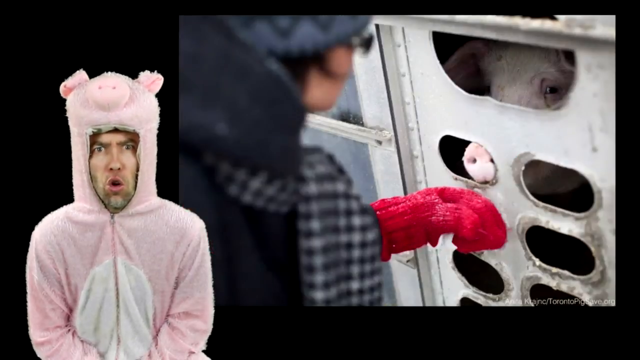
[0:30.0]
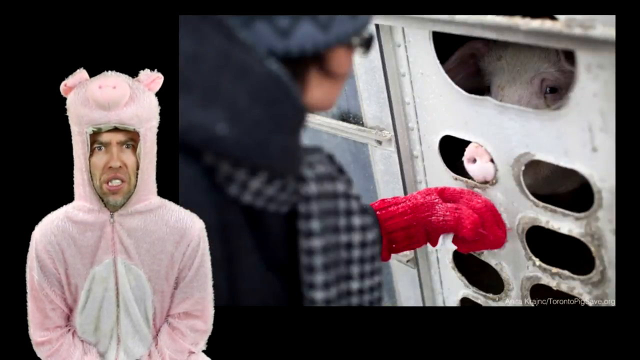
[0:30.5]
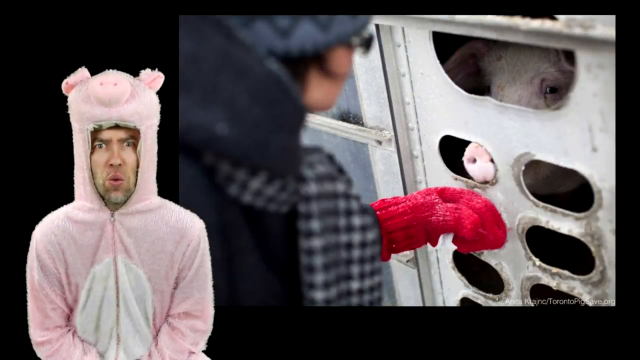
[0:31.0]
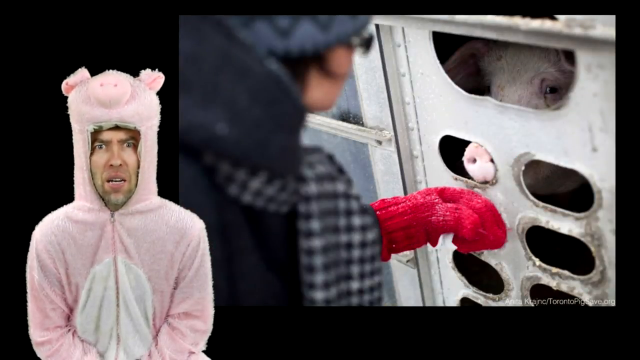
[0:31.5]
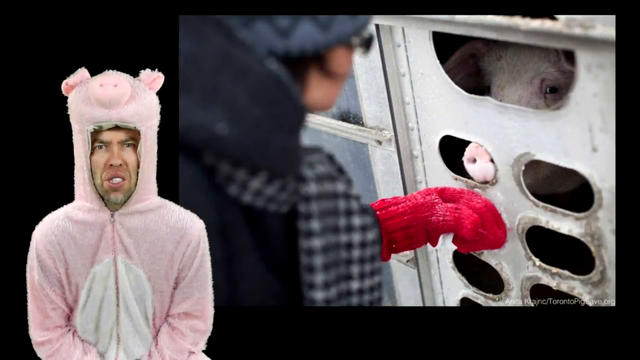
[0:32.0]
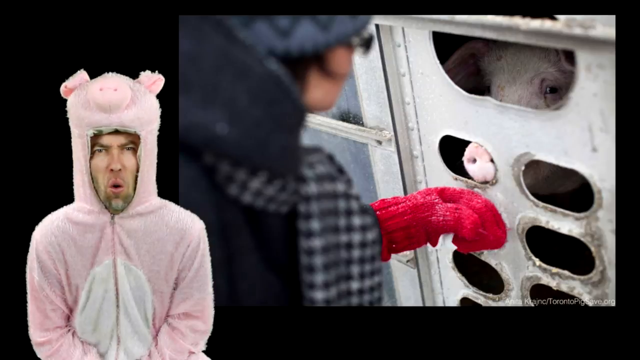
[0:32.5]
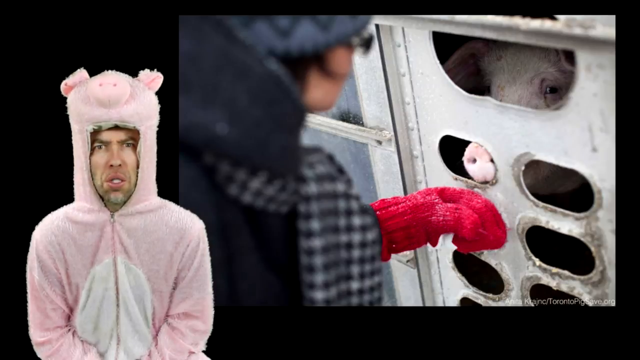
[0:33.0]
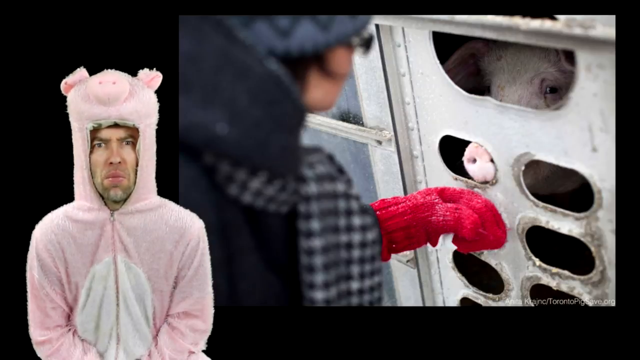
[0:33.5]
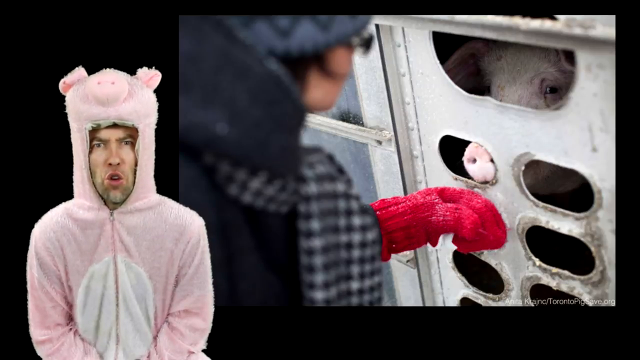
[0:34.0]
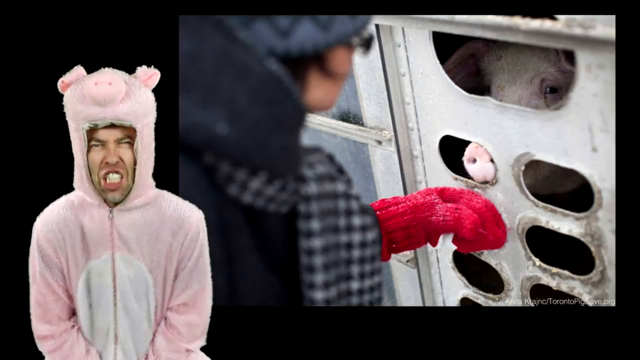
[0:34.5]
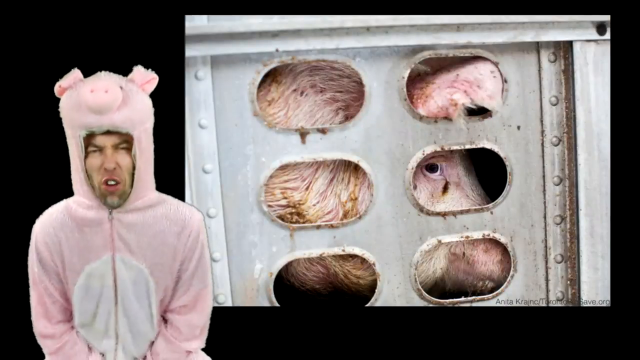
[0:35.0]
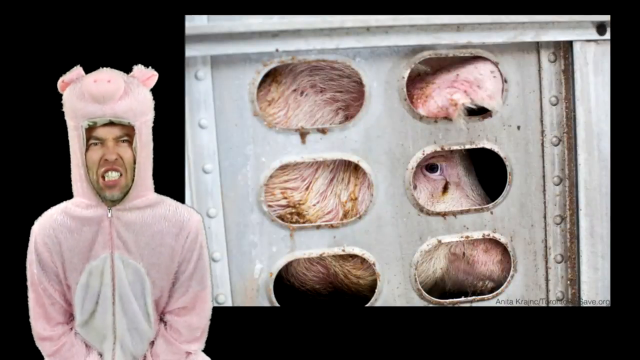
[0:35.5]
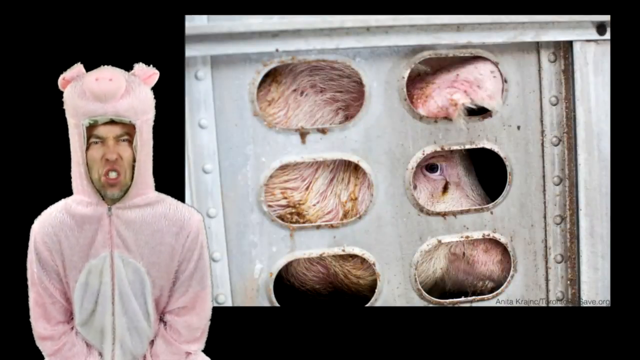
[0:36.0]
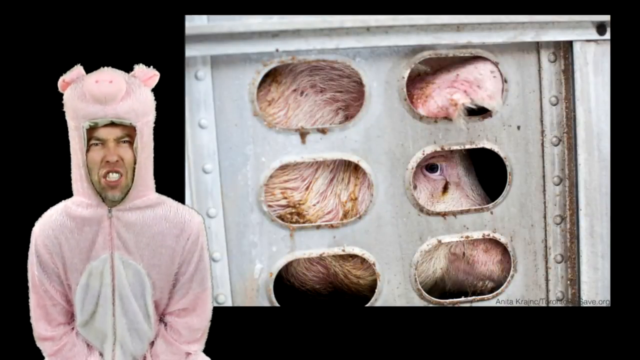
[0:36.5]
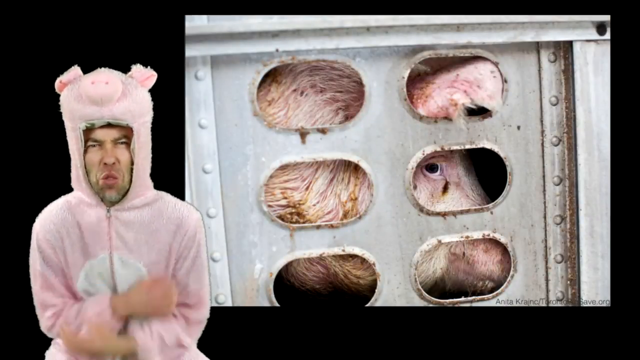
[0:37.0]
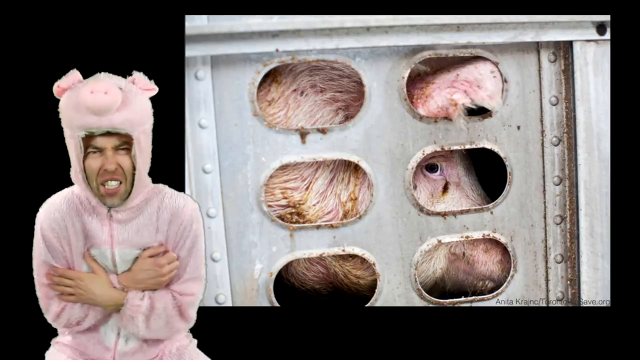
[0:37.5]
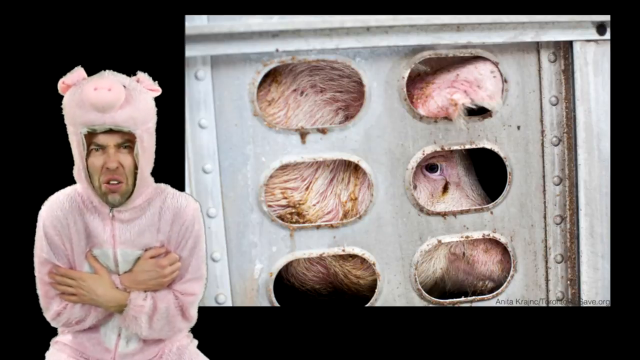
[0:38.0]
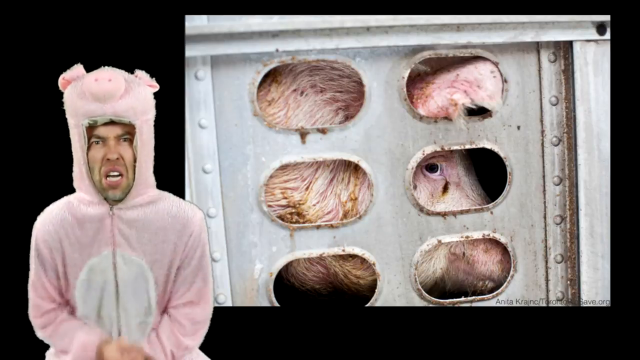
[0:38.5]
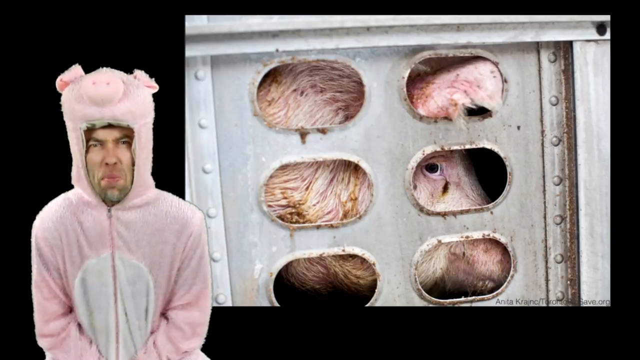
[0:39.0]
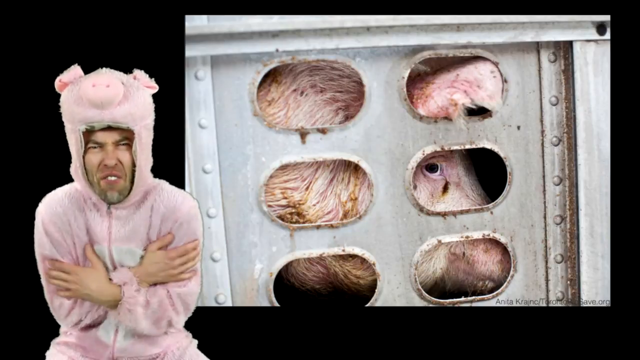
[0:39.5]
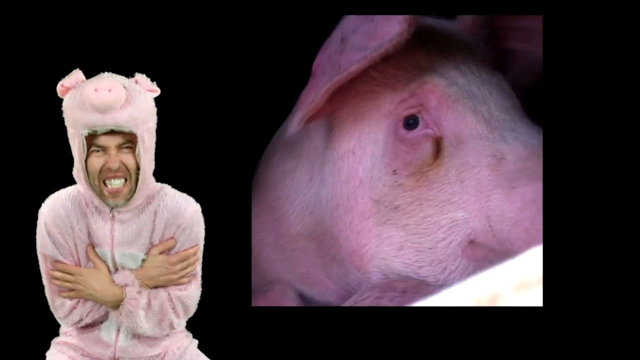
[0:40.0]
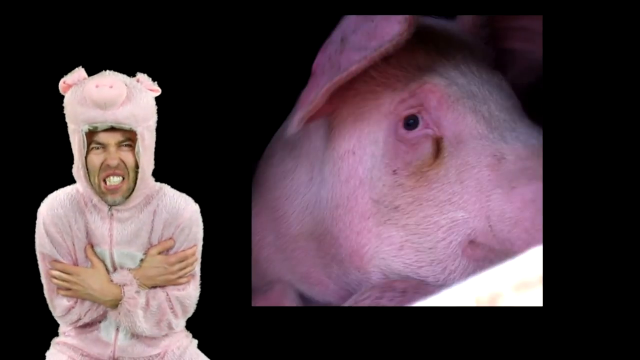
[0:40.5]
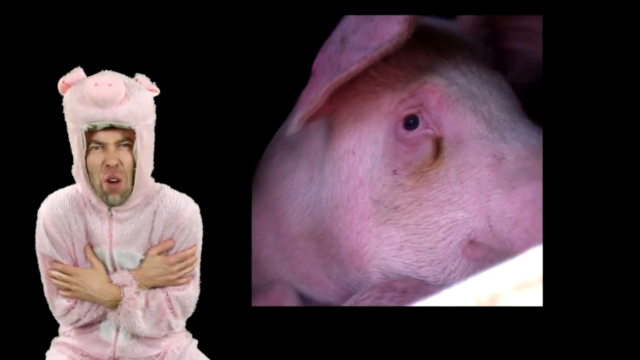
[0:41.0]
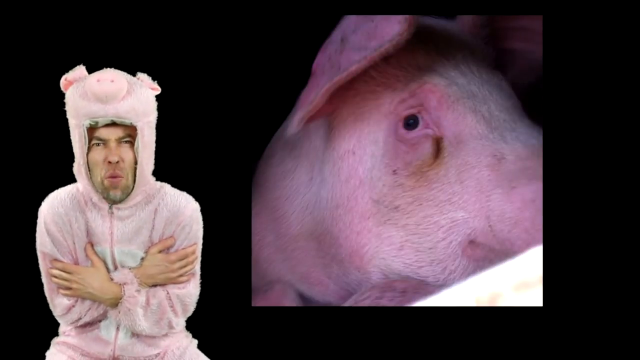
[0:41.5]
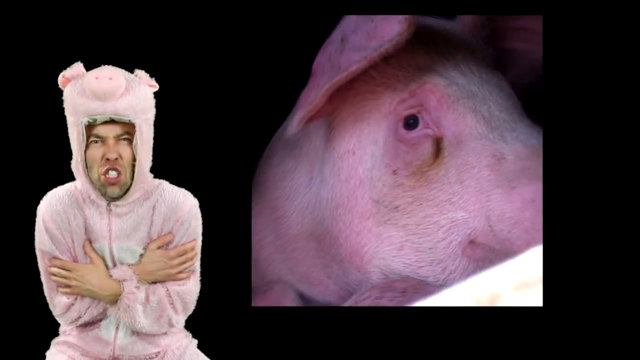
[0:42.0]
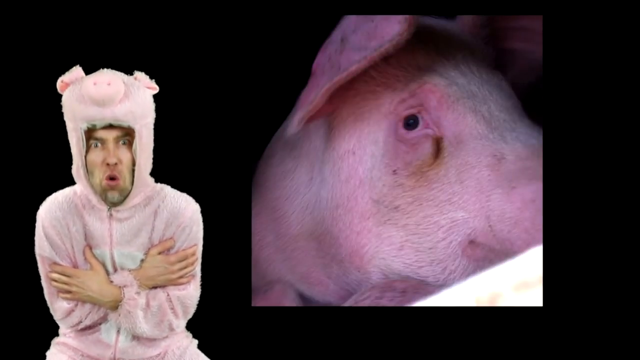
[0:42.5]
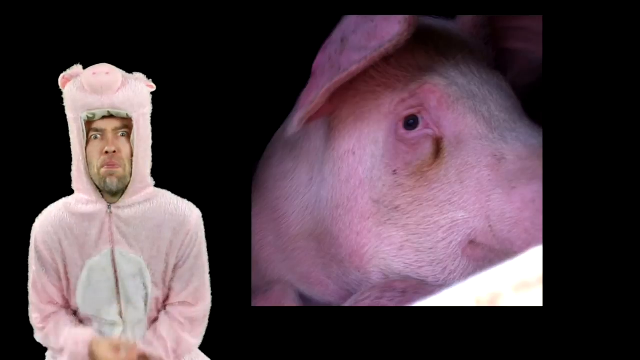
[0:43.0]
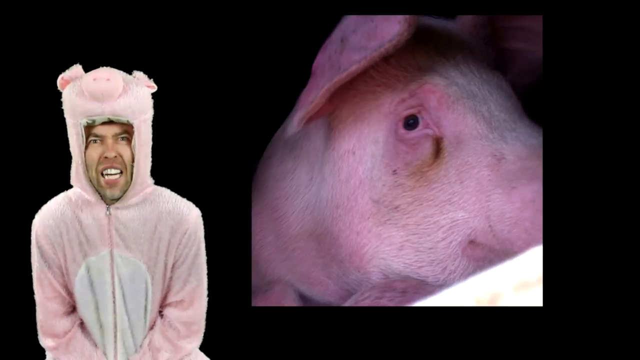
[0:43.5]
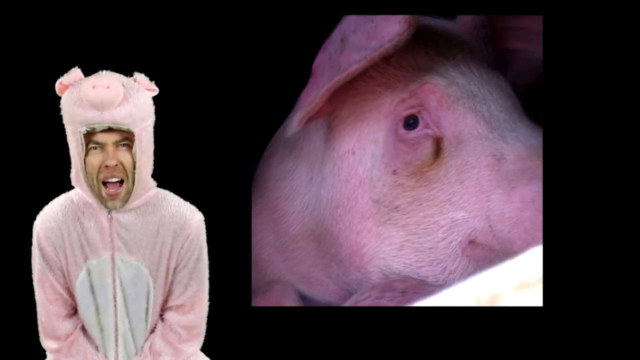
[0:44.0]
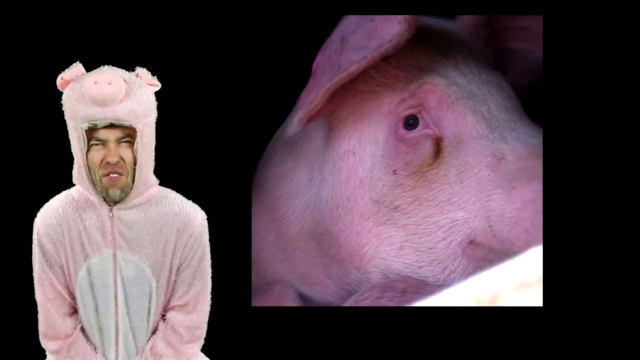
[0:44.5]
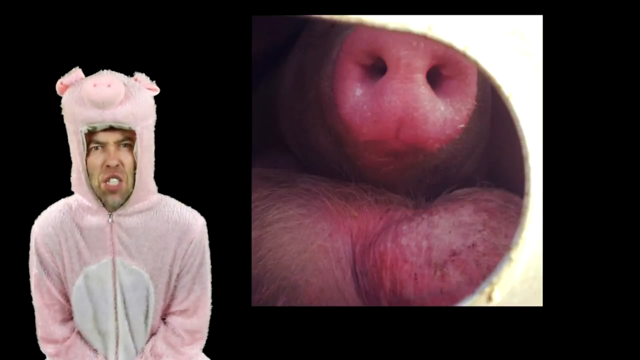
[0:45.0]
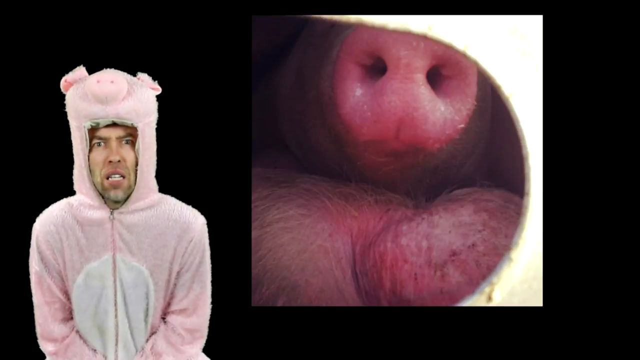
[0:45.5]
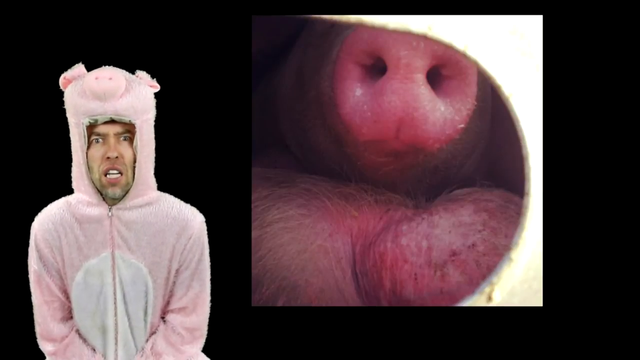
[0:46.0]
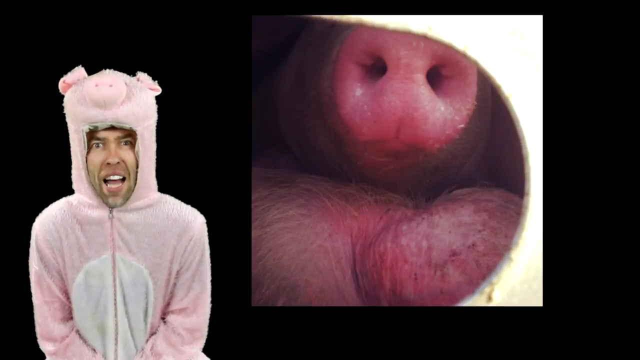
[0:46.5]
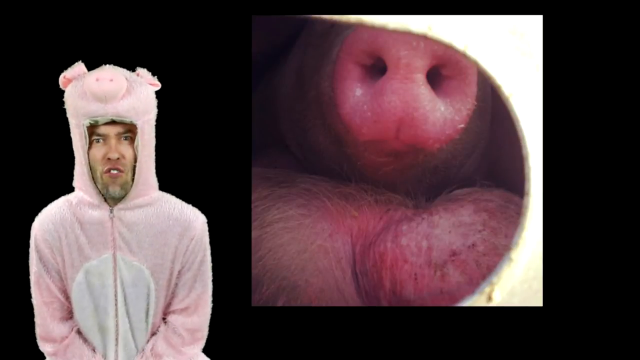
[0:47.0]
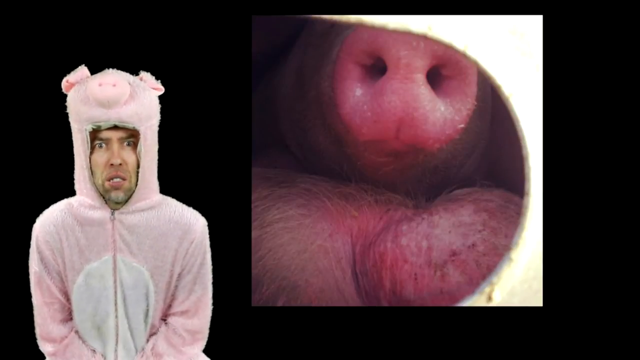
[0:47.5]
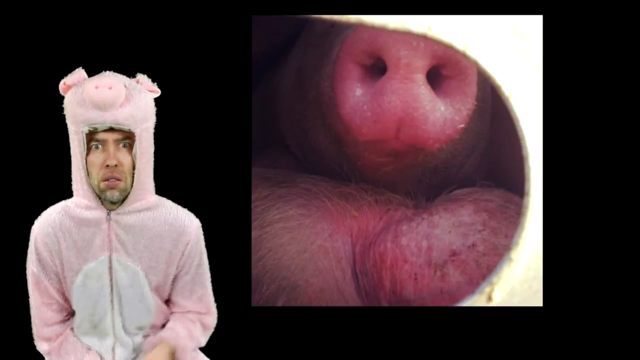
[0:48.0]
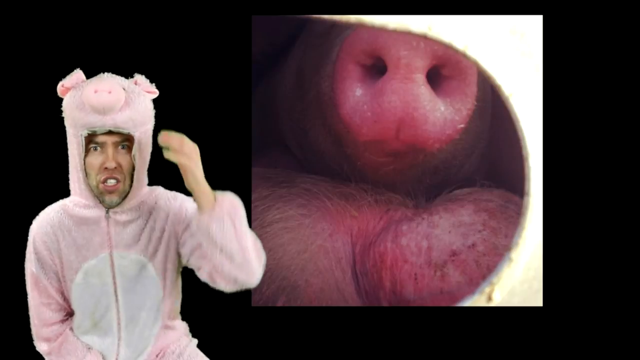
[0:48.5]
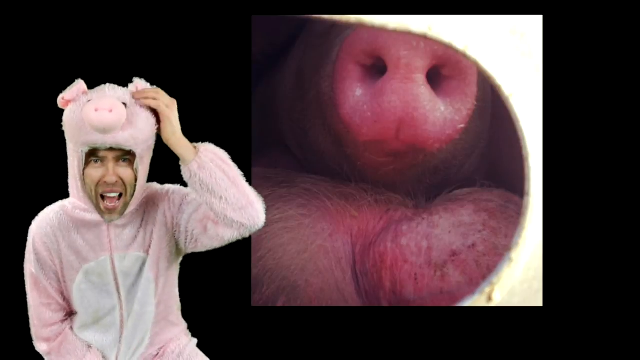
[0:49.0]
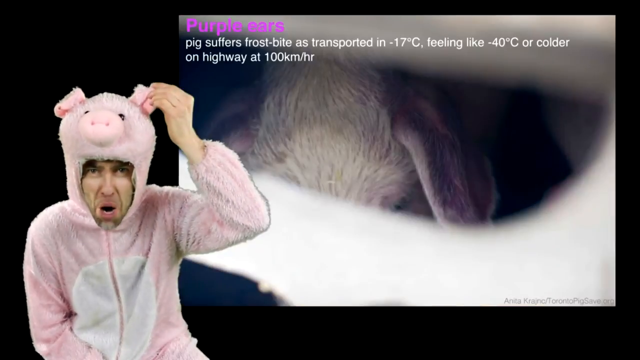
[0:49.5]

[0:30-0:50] The man in the pink pig costume talks and makes faces, holding his arms together, shaking and squeezing his face. Beside him are different still pictures of pigs, from the snout of a pig to the eyes of a pig. A person in a red glove, wearing a scarf around the neck and sunglasses, looks at the pig inside what looks like a truck. The man in the costume keeps talking and squeezing his face. A truck with an opening appears, with pigs loaded inside and a pig's snout coming out of the opening. Briefly, a picture of writing appears showing that pigs are suffering.